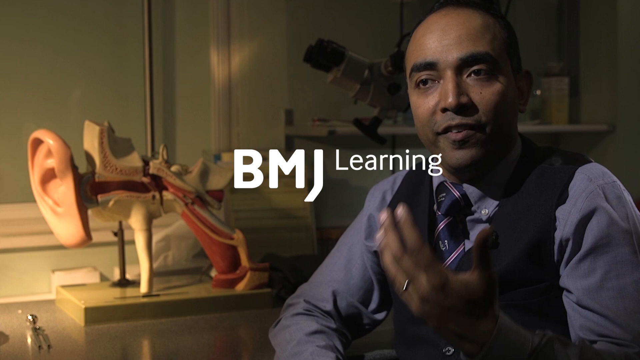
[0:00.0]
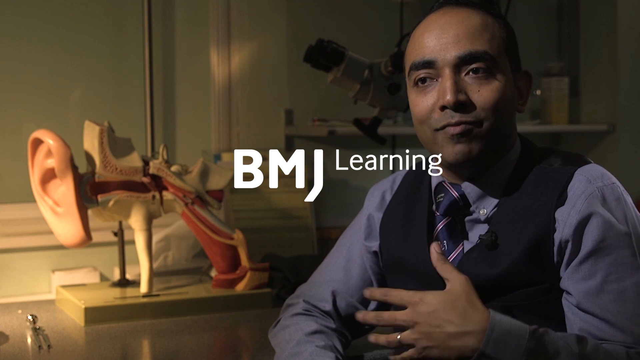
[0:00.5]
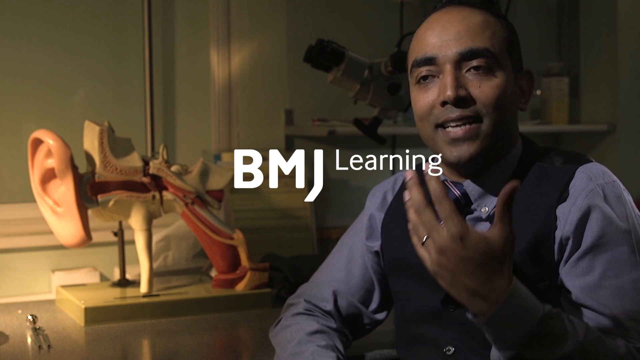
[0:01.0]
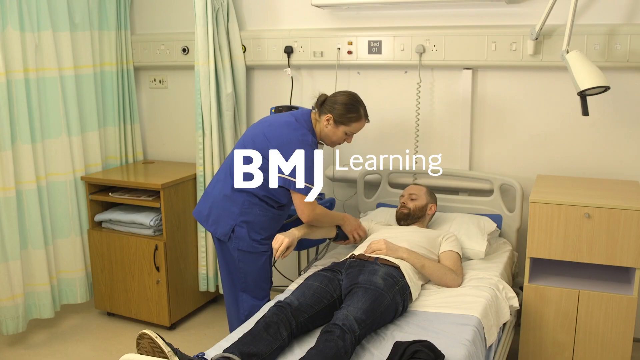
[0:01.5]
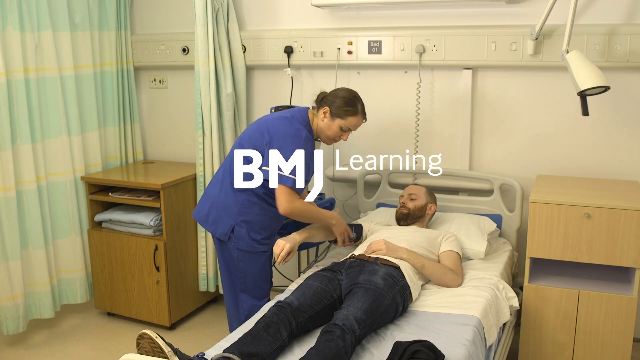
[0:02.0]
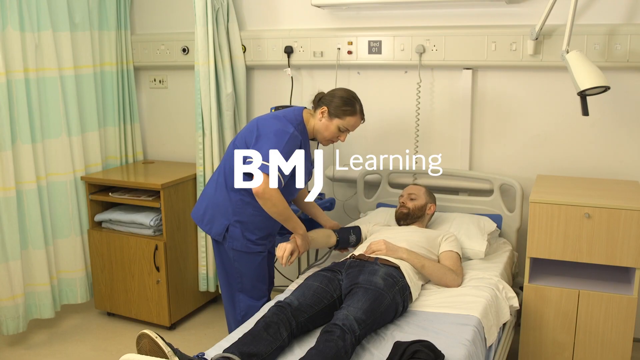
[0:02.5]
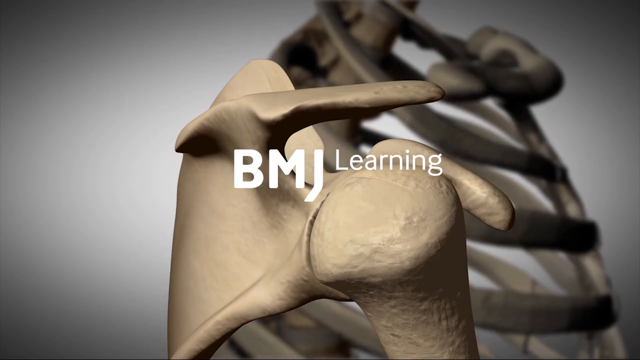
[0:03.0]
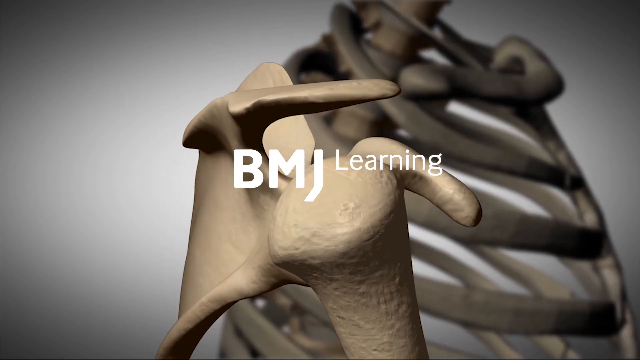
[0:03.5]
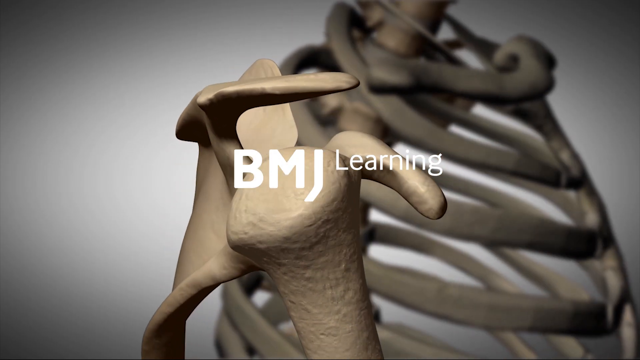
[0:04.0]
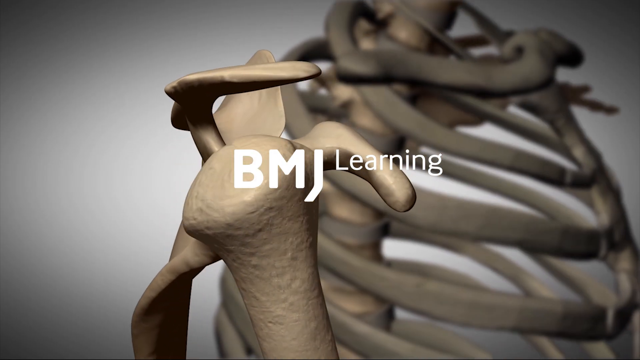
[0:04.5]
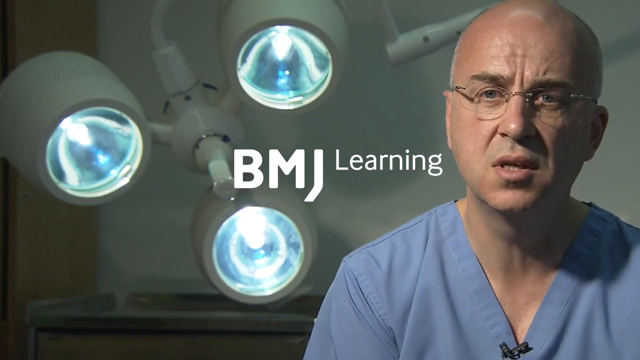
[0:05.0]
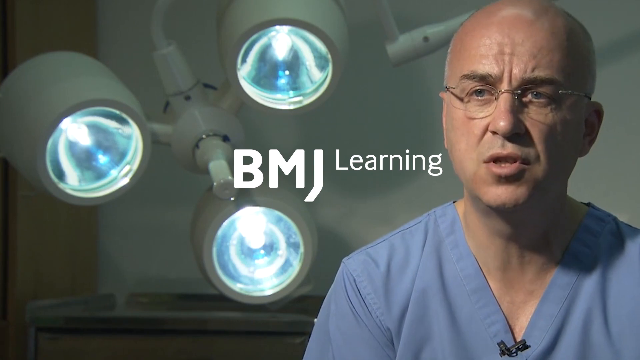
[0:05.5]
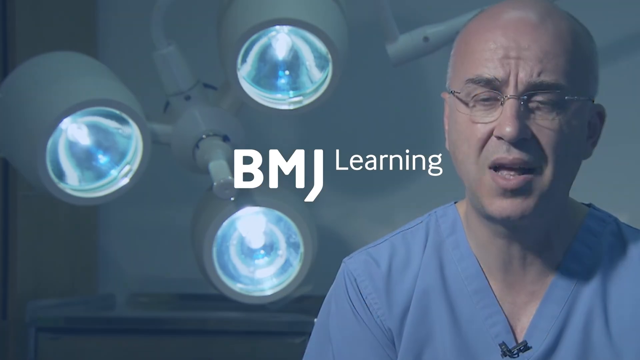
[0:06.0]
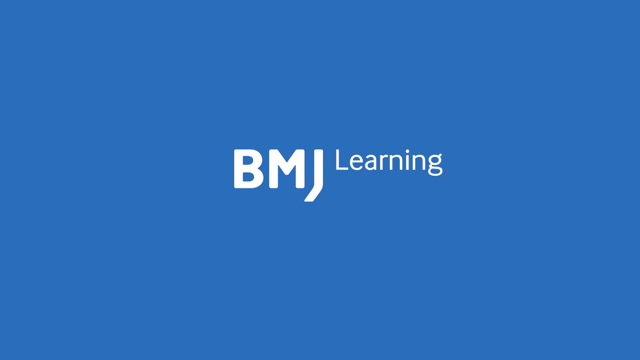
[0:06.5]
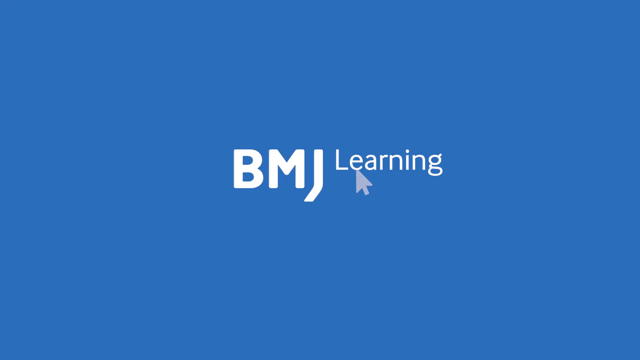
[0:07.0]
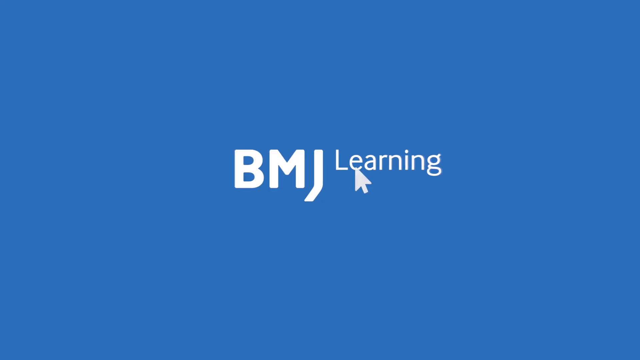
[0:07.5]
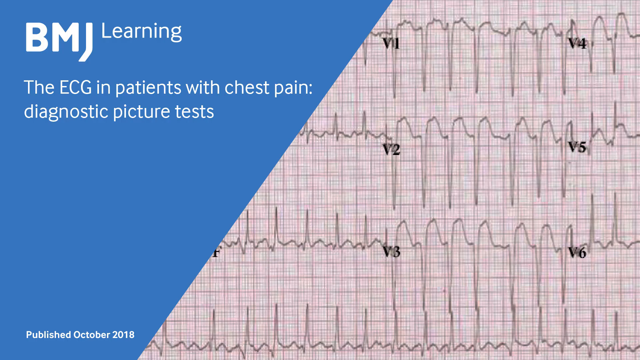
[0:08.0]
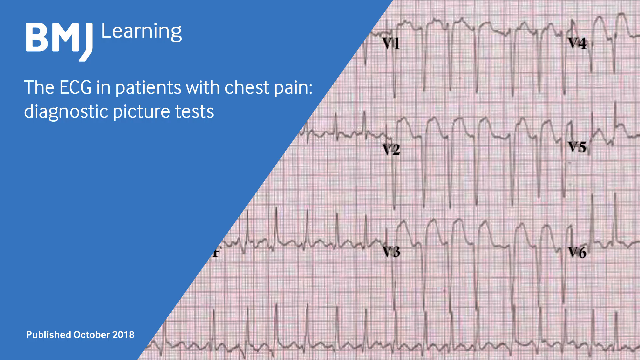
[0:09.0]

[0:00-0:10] A man sits next to a model of some kind that looks like an ear. He wears a blue button-up shirt, a dark blue vest, and a dark blue tie with silver stripes. There is equipment behind him, in what looks like it may be an office of some type. "BMJ learning" is overlaid on the video as it shows different medical situations. The scene moves from the man with the ear model to an ER room where a patient lies on a bed while a nurse works on him, apparently taking his blood pressure. Next comes a skeleton, and then what looks like a doctor in an operating room. The sequence ends with EKG results being displayed.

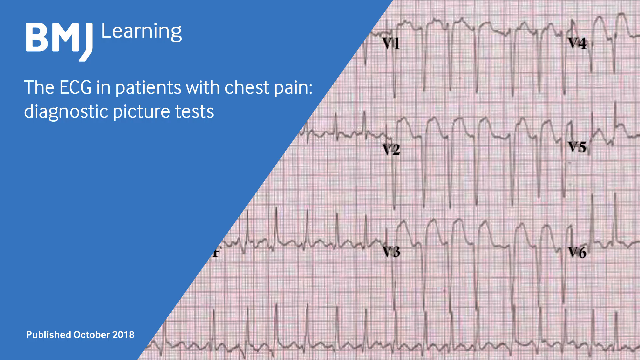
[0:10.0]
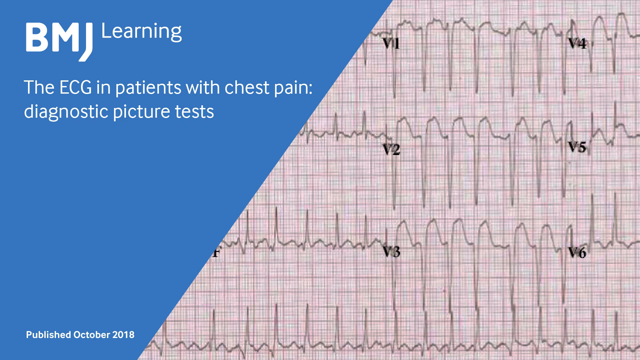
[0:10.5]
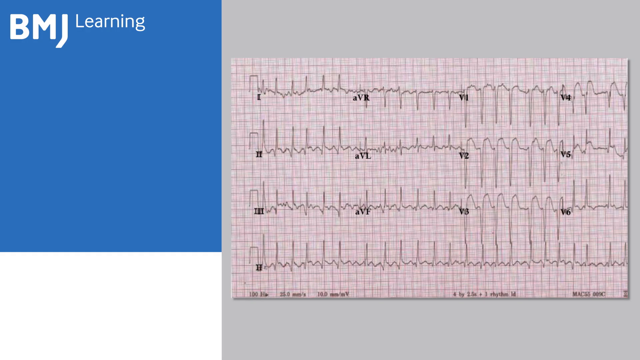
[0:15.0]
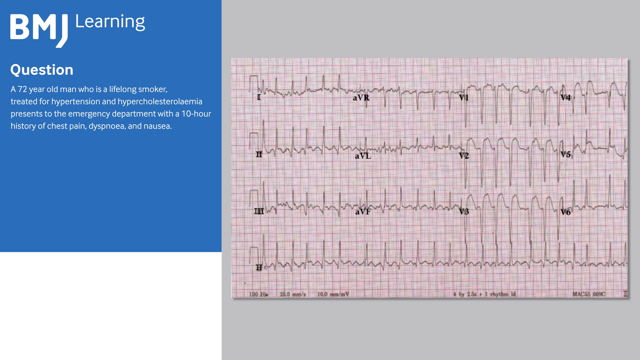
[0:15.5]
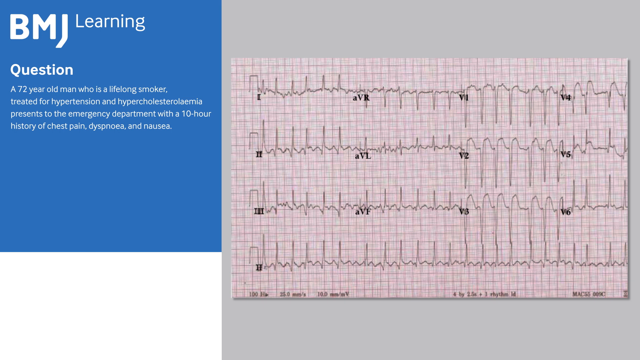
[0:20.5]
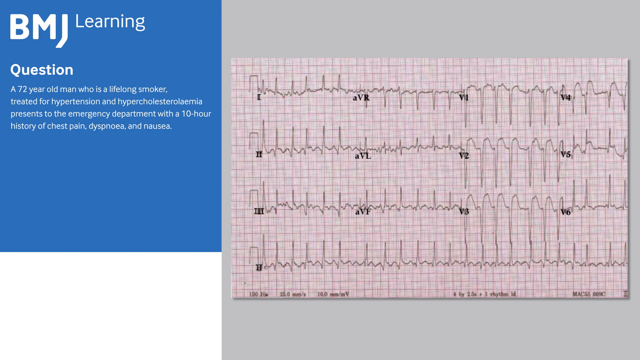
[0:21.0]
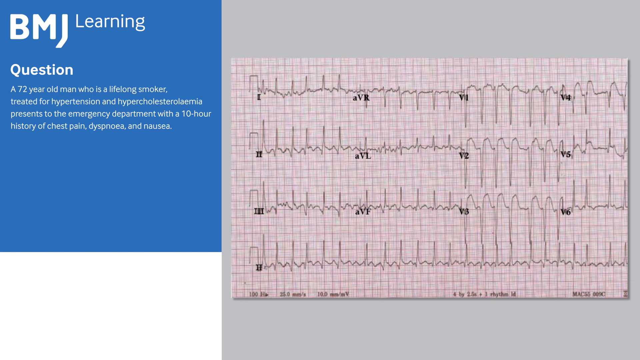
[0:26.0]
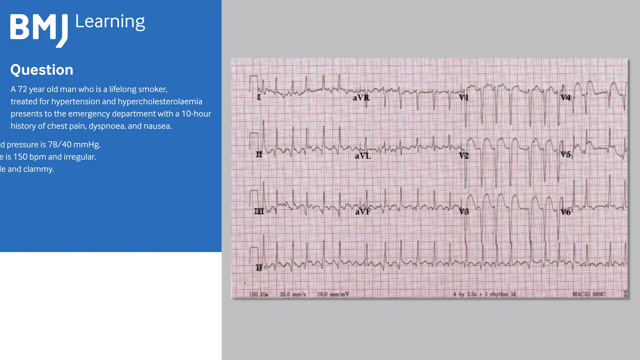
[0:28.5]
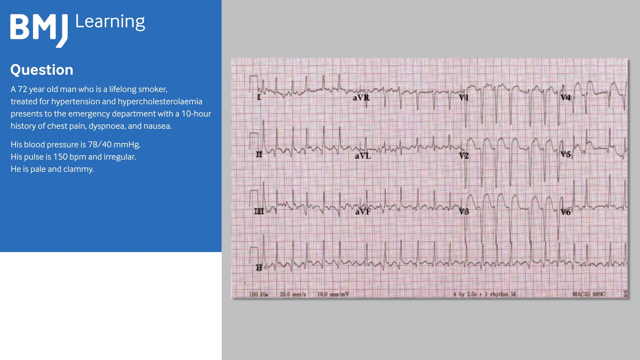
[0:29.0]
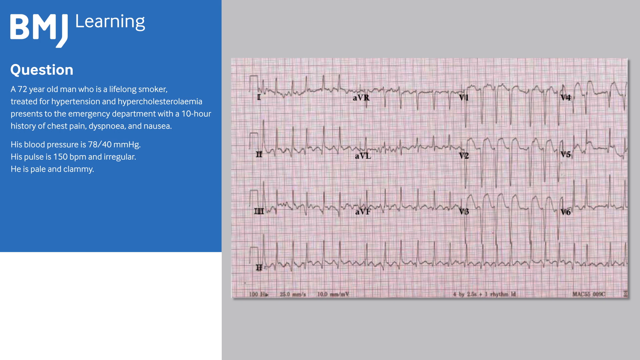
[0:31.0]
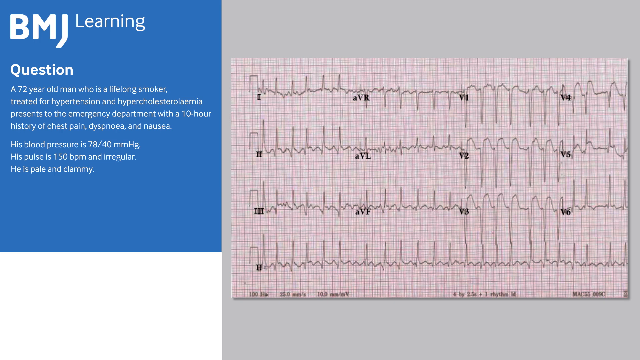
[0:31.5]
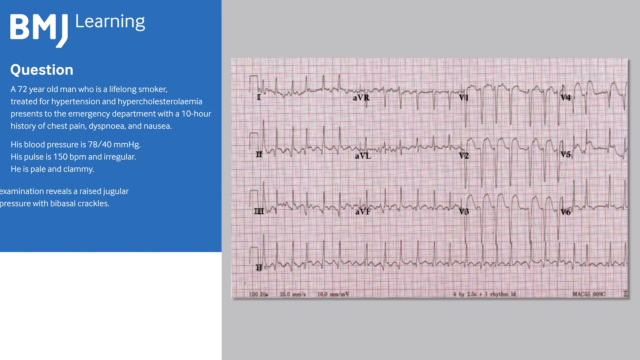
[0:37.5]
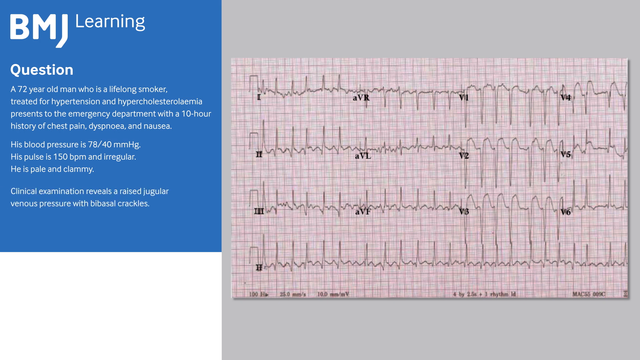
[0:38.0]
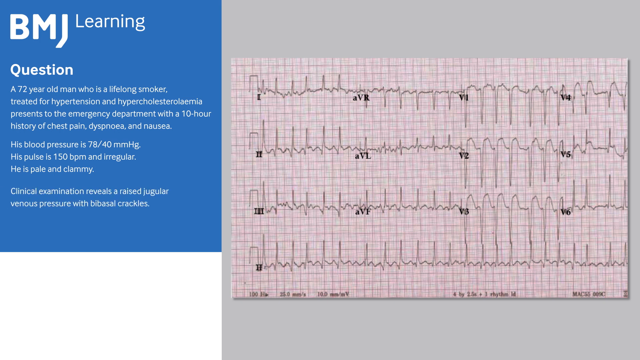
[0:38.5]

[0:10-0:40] An ECG is displayed. A blue background with "BMJ learning" covers half the screen, cut on a diagonal, and "The ECG in patients with chest pain diagnostic picture test" is written on it in white. The rest of the screen shows the ECG results, a graph of the heart rate, with V1, V2, V3, V4, V5 and V6 overlaid in black font. A publication date in October is written in white. A question then appears: "A 72-year-old man who is a lifelong smoker treated for hypertension and hypercholesterolemia presents to the emergency department with a 10-hour history of chest pain". The text showing the blood pressure and "His pulse is" cuts off abruptly and disappears. The white writing then sits on the blue background across one quarter of the screen, with the ECG results on the other three quarters. "His pulse is 150 beats per minute and irregular. He is pale and clammy" is also written on the blue, followed by "Clinical examination revealed a raised jugular".